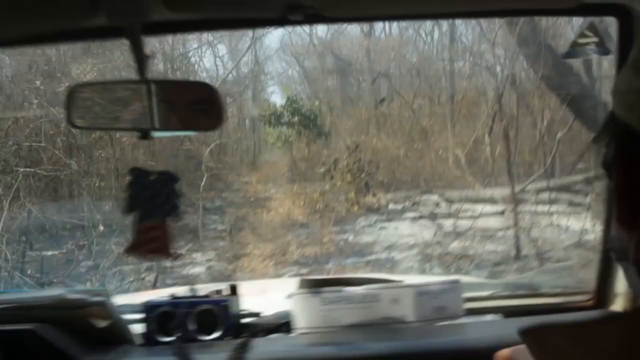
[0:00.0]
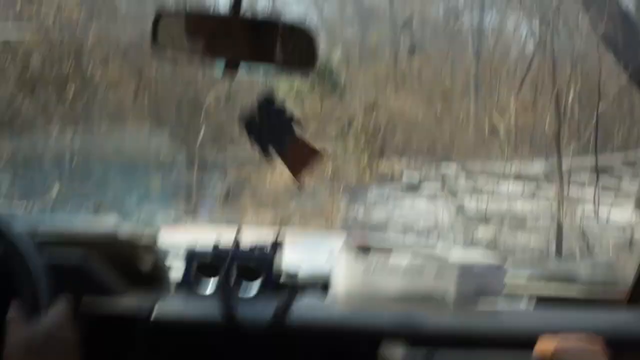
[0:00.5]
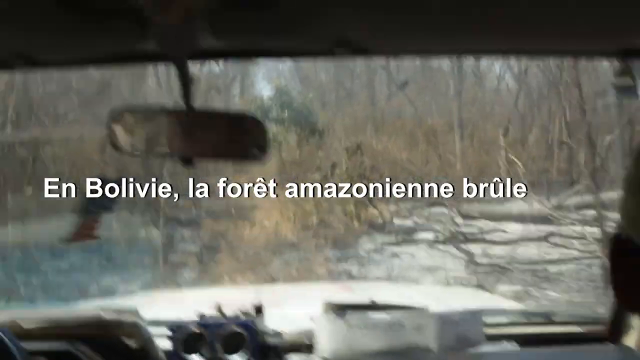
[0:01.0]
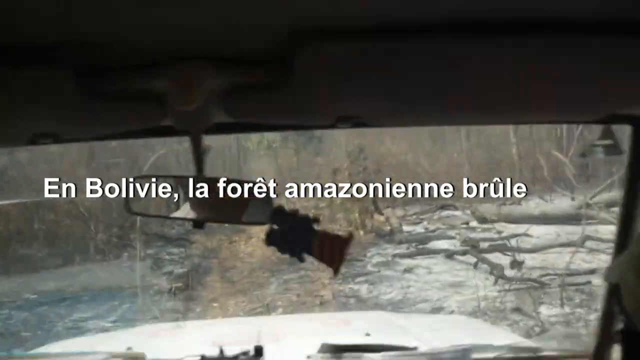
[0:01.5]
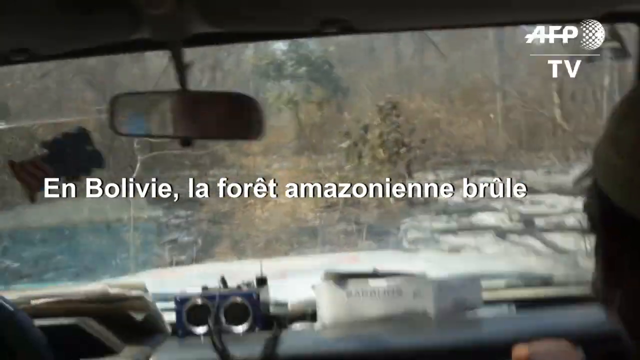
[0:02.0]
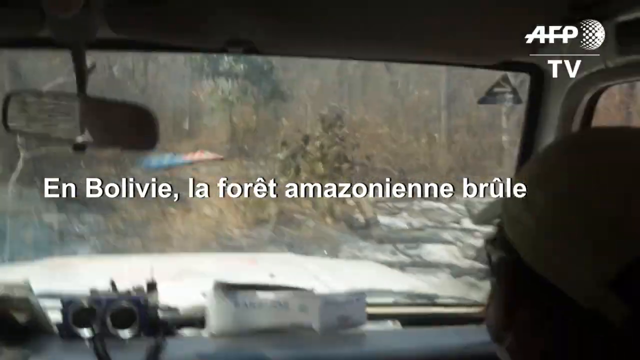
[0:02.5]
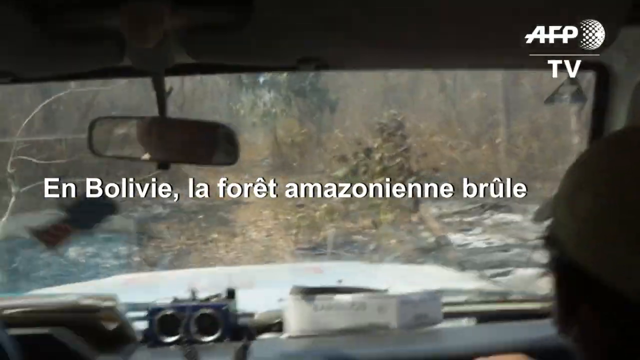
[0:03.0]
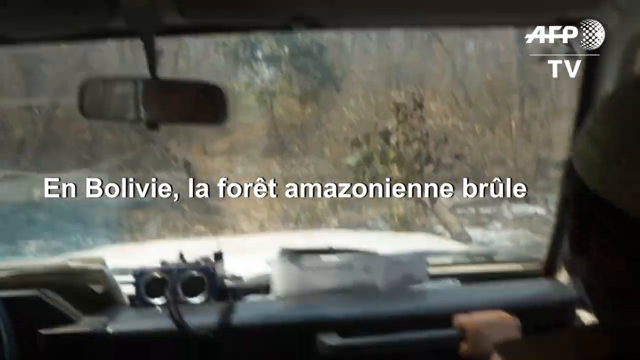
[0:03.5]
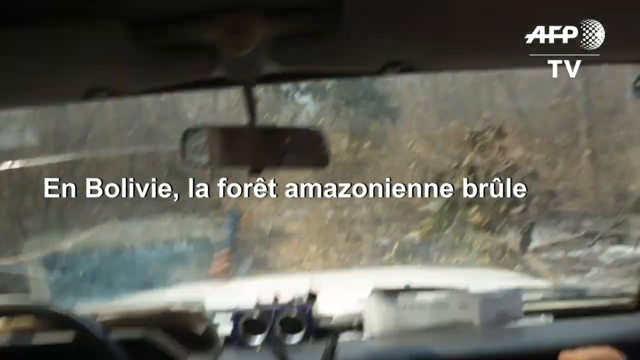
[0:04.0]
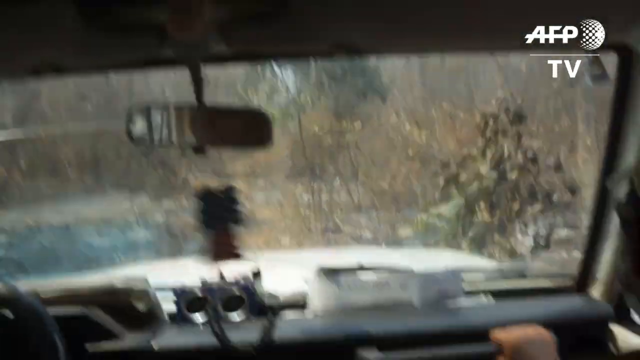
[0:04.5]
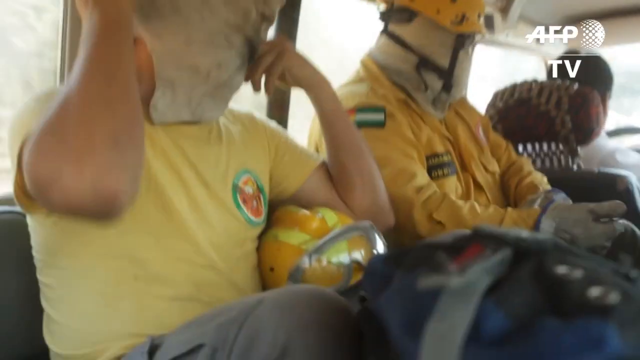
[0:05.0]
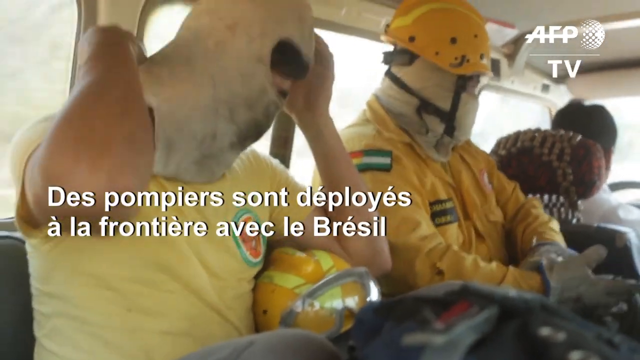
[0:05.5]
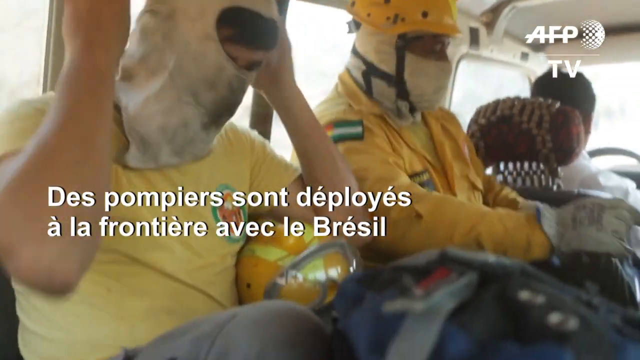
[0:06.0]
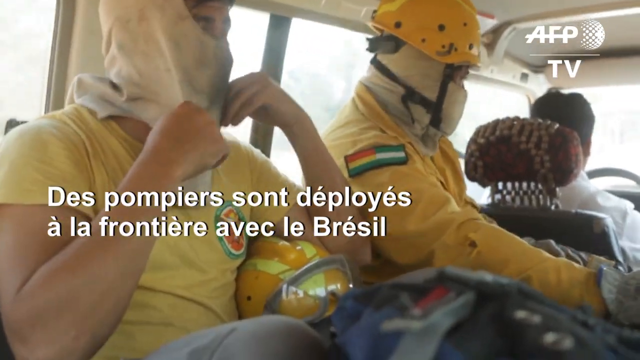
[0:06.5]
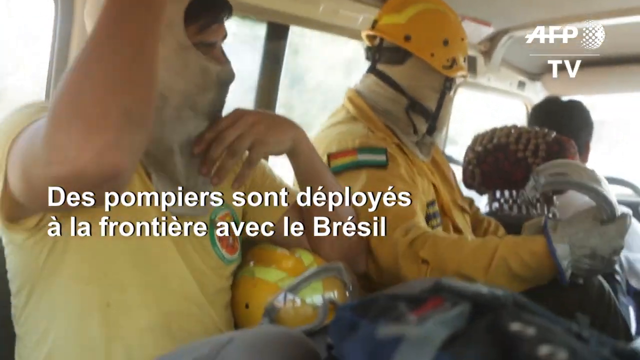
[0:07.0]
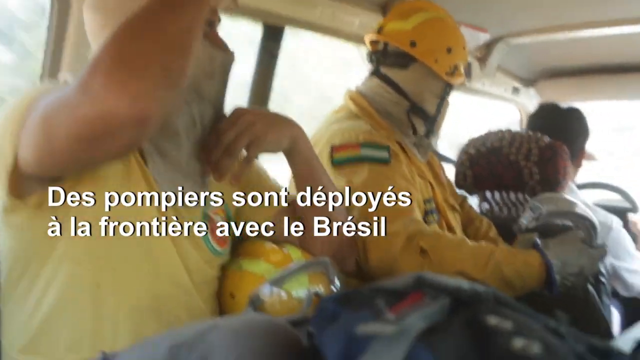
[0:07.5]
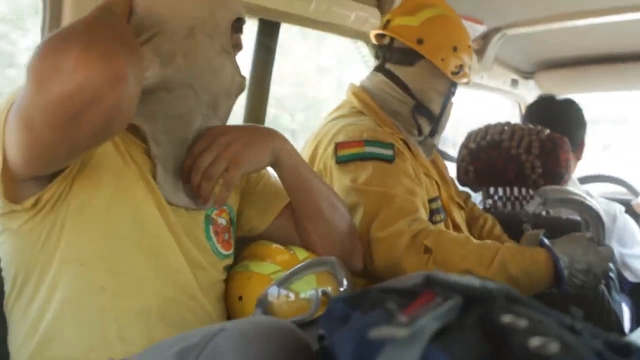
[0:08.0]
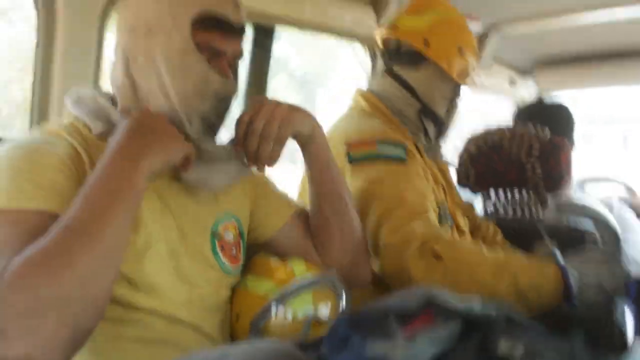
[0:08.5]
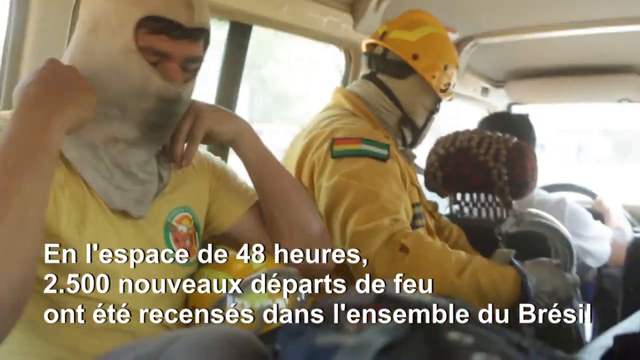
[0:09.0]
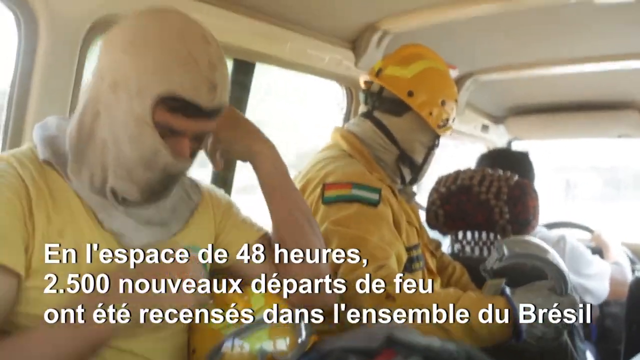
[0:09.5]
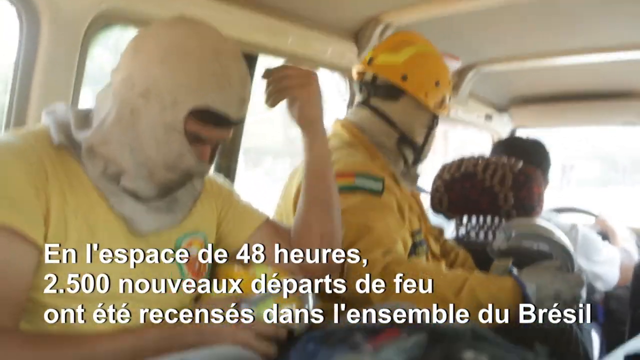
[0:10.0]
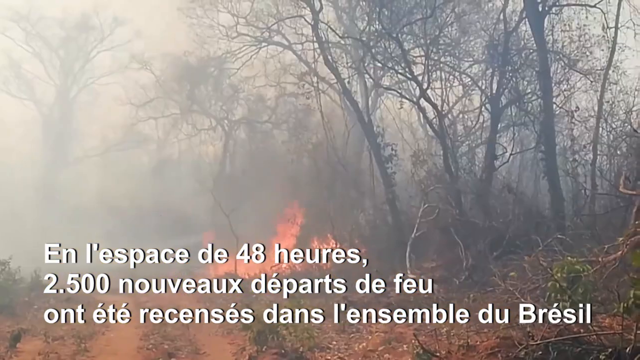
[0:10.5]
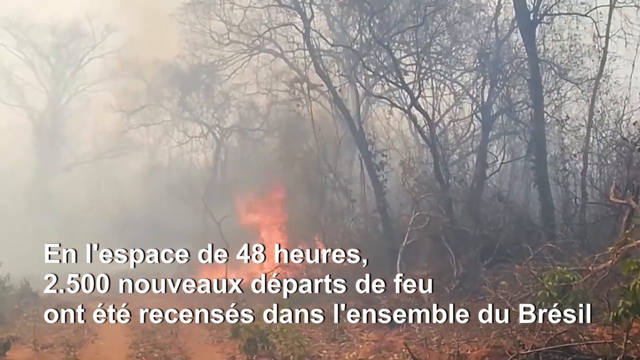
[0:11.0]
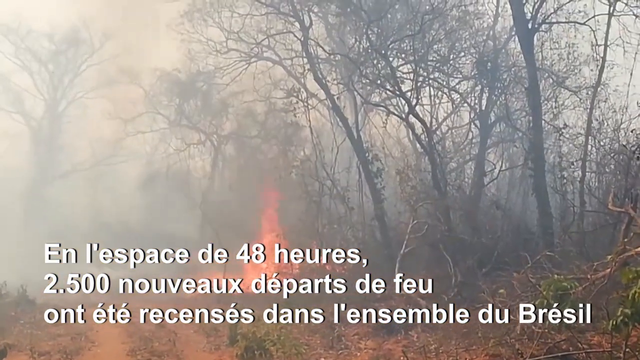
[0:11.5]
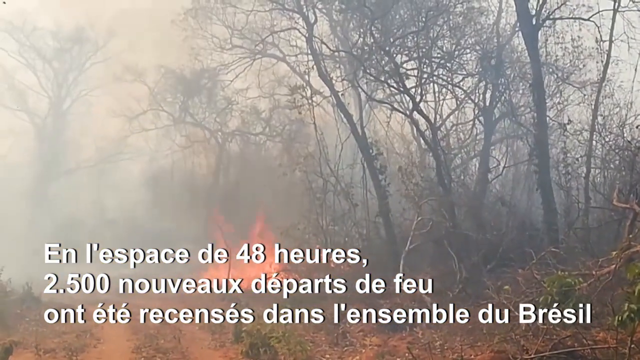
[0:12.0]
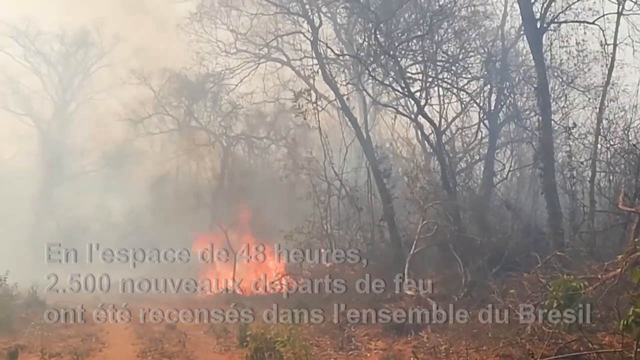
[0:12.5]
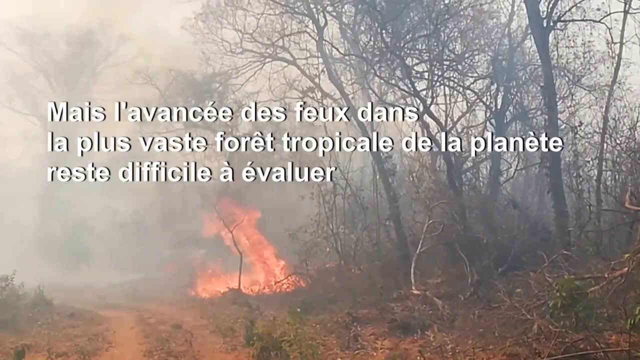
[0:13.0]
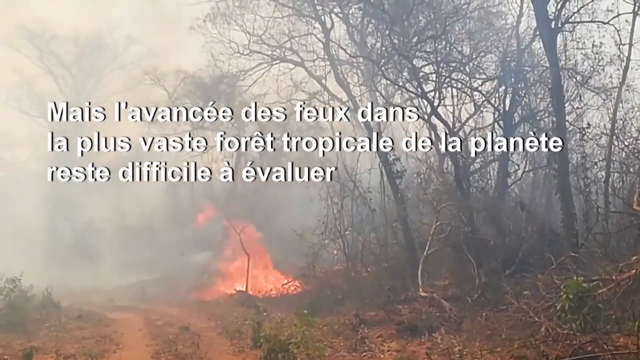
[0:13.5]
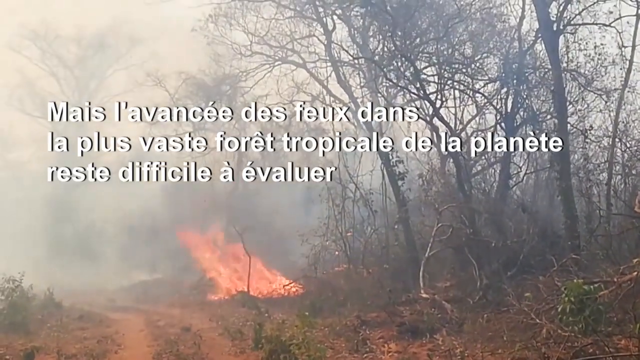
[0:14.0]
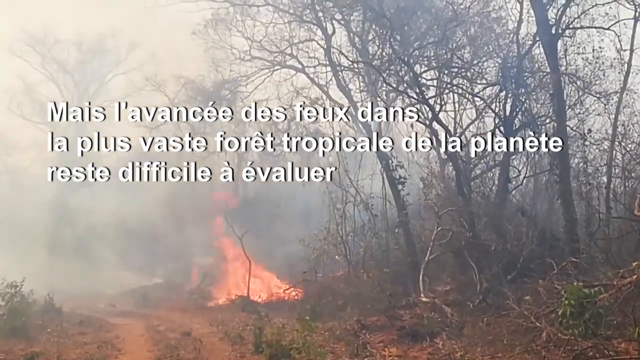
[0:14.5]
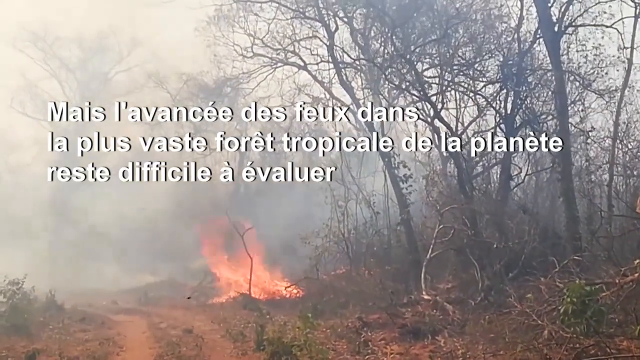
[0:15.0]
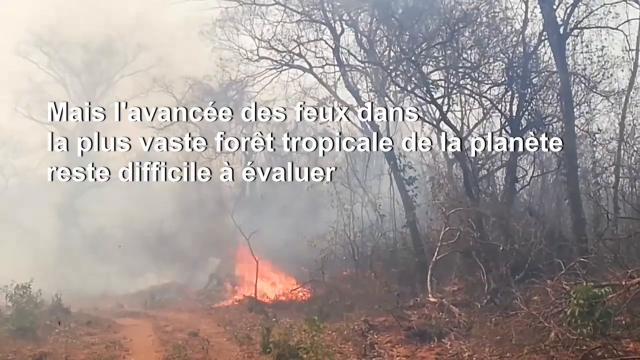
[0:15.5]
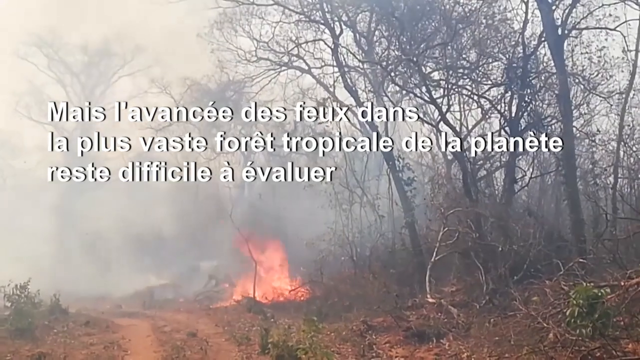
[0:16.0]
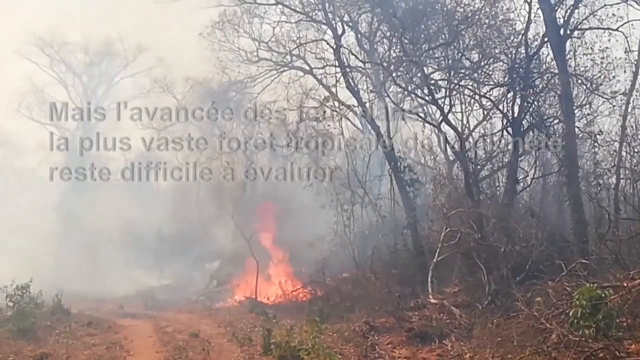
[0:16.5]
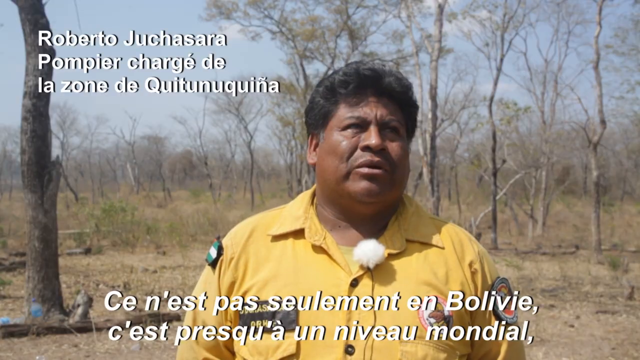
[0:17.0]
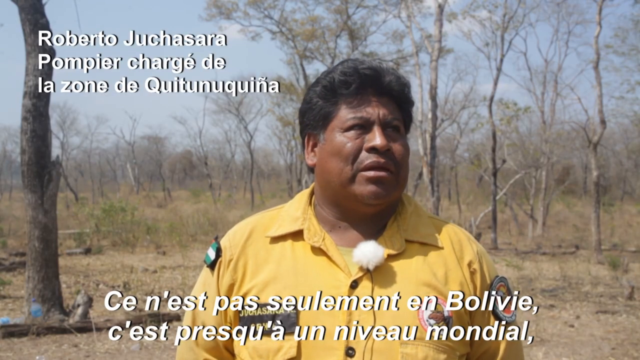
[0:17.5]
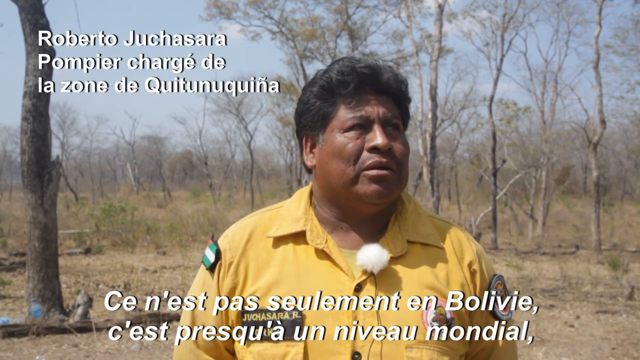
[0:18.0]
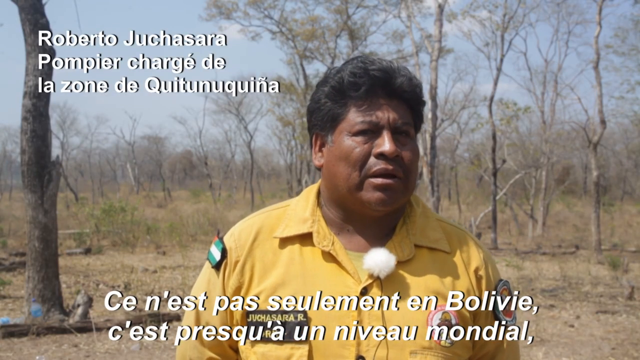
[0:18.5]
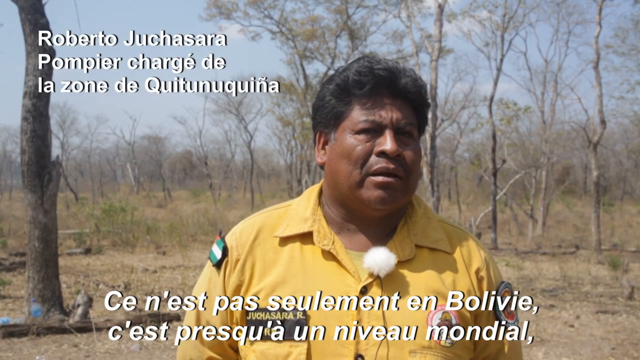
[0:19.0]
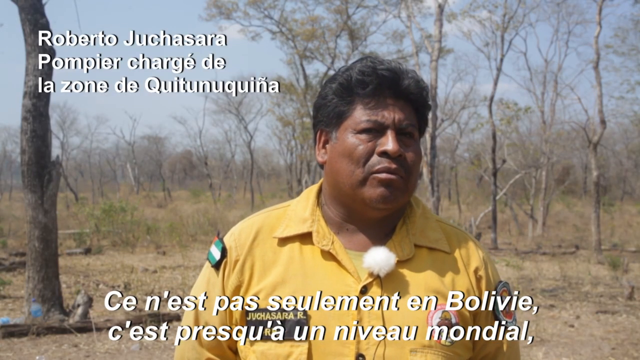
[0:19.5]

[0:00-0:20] The video opens inside a car. A mirror hangs from the top, and hanging from the mirror is what appears to be an air freshener, apparently in the shape of a bell, possibly the Liberty Bell. On the dashboard are a box and two cameras. The car is moving back and forth and the air freshener swings wildly as they drive over rugged terrain, apparently through a forest, with trees all over the place and what appears to be snow on the ground. A man in the passenger seat wears a white hat and glasses. In the top right-hand corner are the letters "AFP", with "TV" below, and next to them a three-fourths sphere. Words in a different language come on the screen; they seem to mention something about Bolivia and the Amazon. Next, the back of the driver's head is visible; he wears a white shirt. Behind him are two men in yellow shirts, one short-sleeved and one long-sleeved. The one in the long sleeve has a white mask covering his face and a yellow helmet on. The one next to him is putting a white mask on and holds his helmet under his left arm, not yet wearing it. Their shirts have a circular green and red logo on the left side, and the man with the helmet on has a flag on his sleeve in white, green, orange, yellow and black. More words in a foreign language pop up on the screen; they seem to say something about 48 hours and include the number 2.5. A picture of a forest that looks fairly dry follows, with a fire in the middle of it and smoke coming out. In the last shot, a man with brown skin and dark hair, wearing a yellow polo shirt or button shirt, stands in the middle of the forest. He has patches on his right and left arms, a patch on his right chest that seems to possibly show his name, and a patch on his left chest. A microphone is on the top left of his collar, and he looks like he is being interviewed.